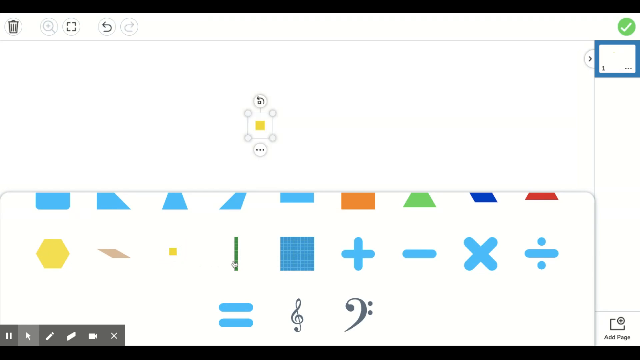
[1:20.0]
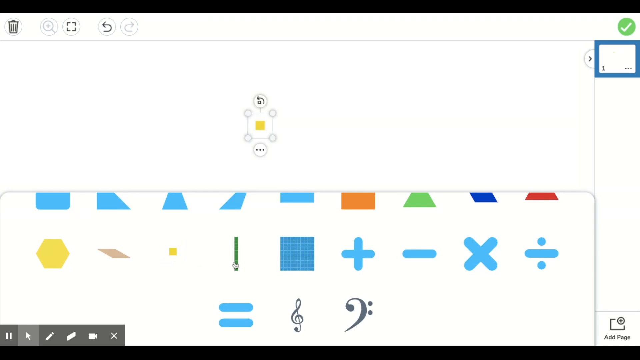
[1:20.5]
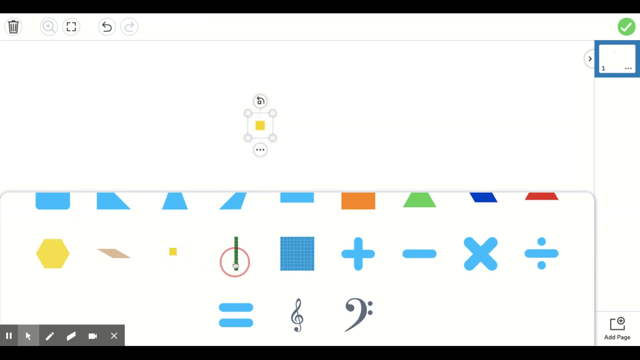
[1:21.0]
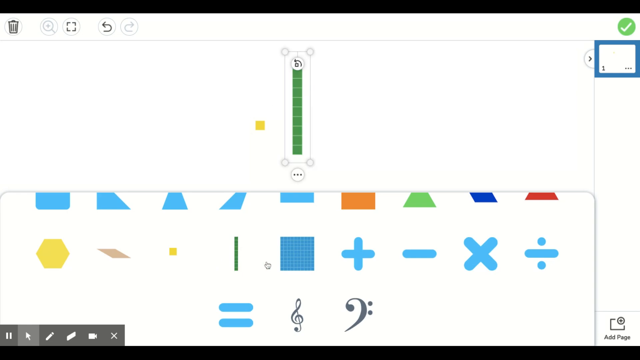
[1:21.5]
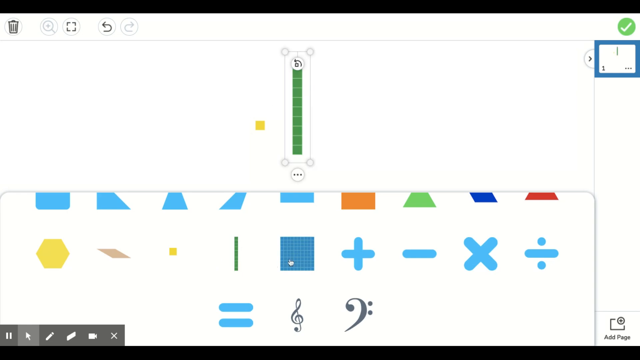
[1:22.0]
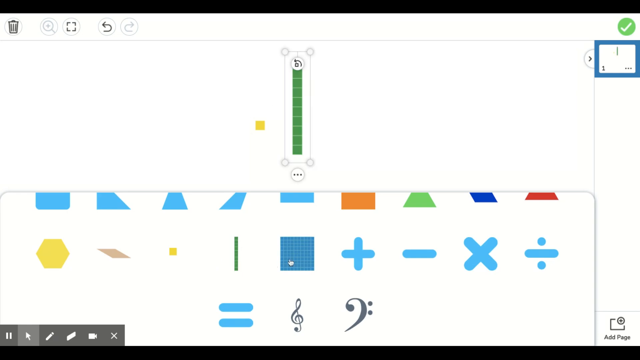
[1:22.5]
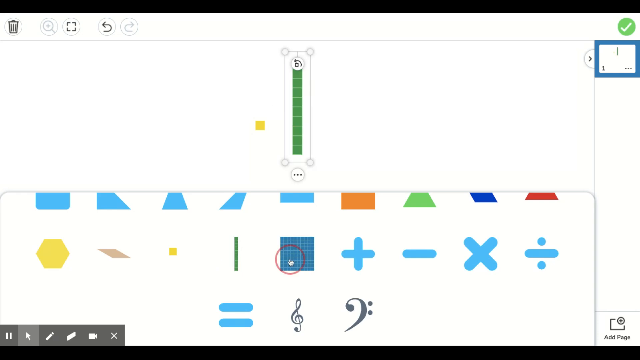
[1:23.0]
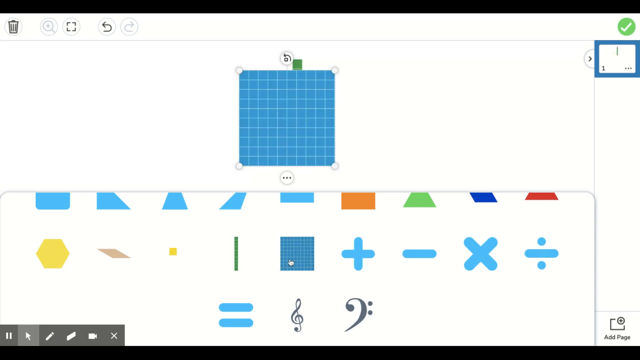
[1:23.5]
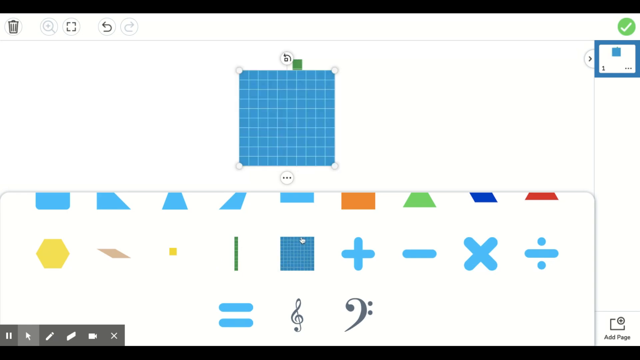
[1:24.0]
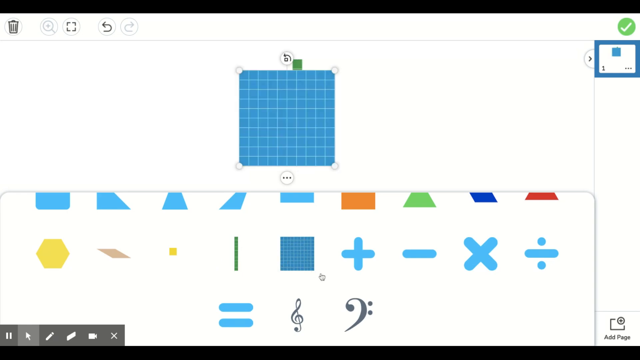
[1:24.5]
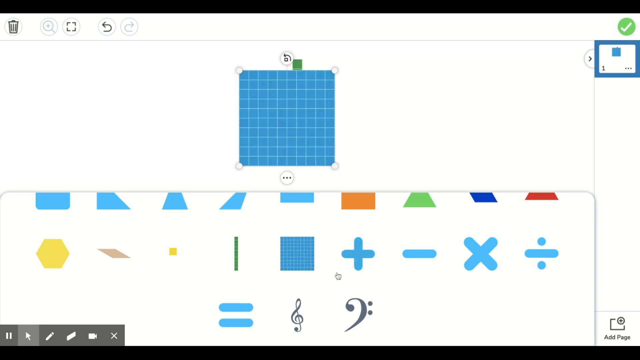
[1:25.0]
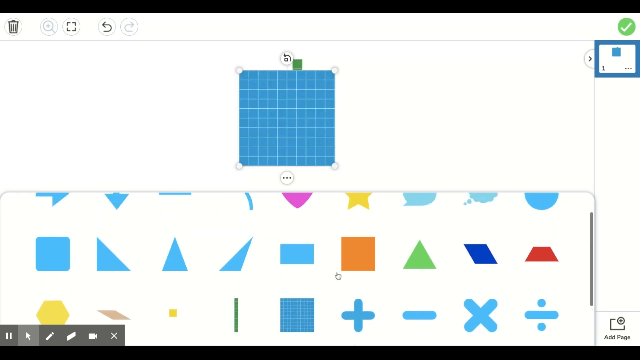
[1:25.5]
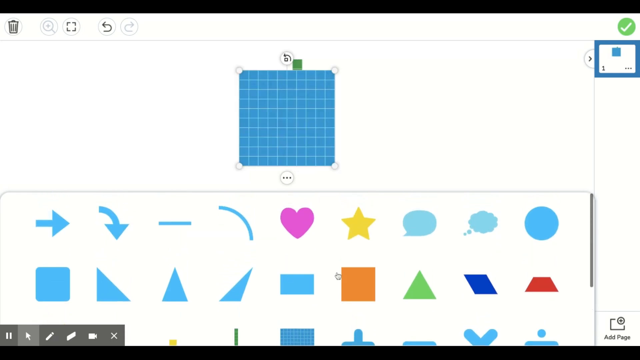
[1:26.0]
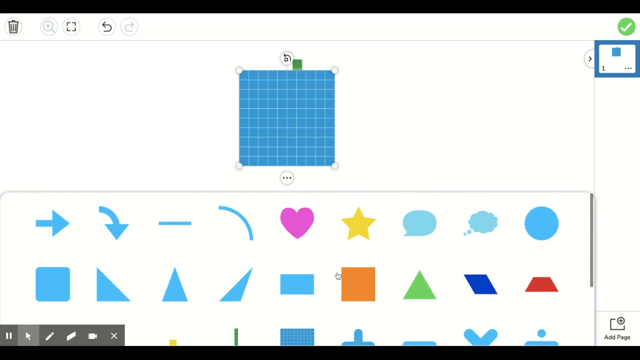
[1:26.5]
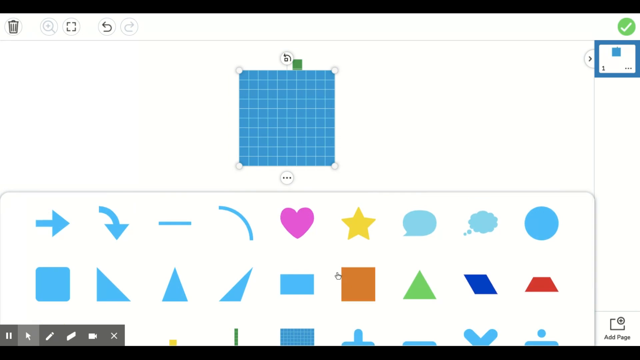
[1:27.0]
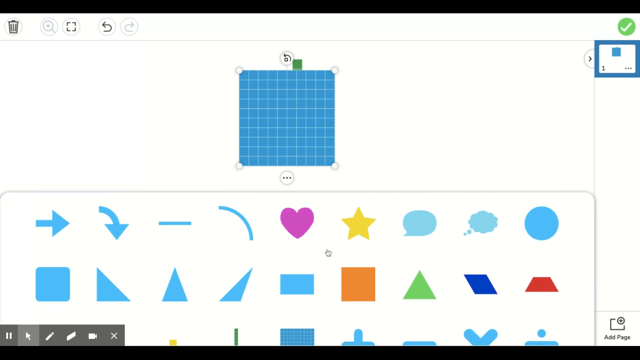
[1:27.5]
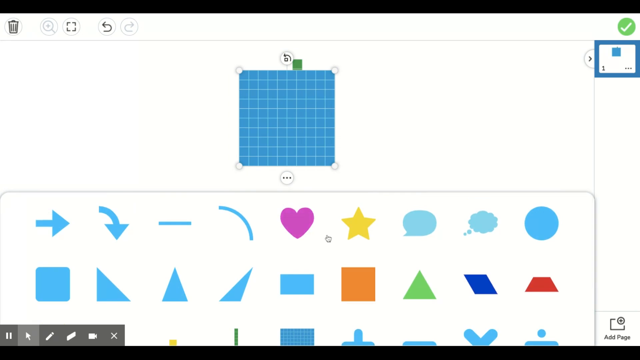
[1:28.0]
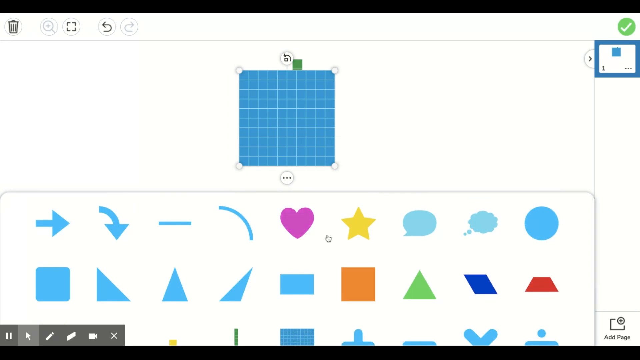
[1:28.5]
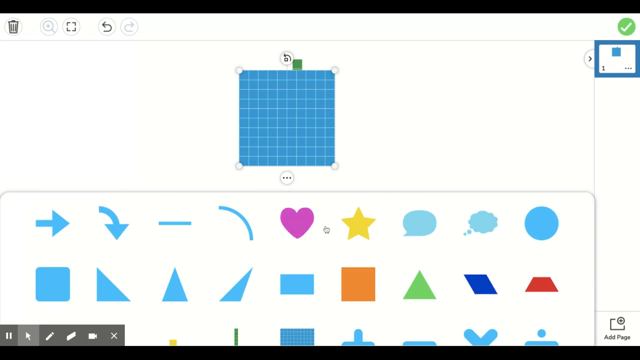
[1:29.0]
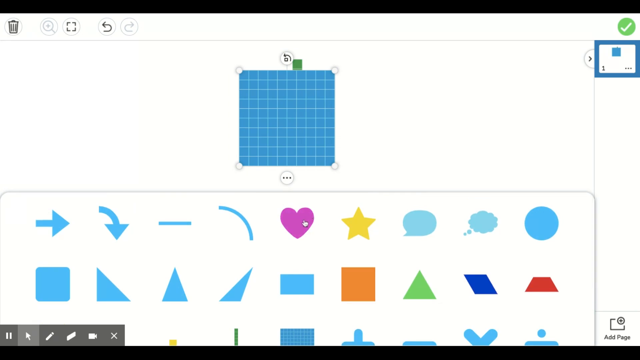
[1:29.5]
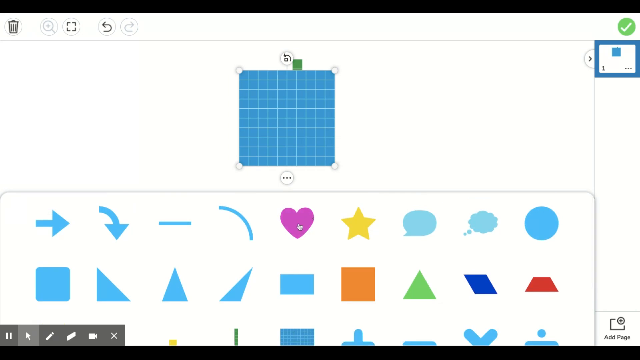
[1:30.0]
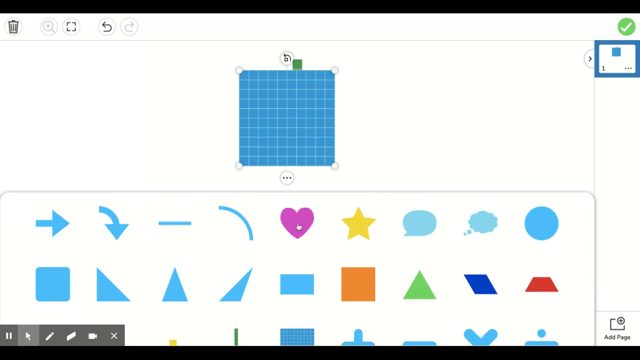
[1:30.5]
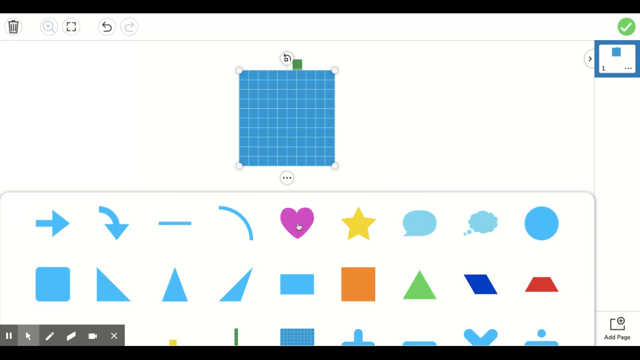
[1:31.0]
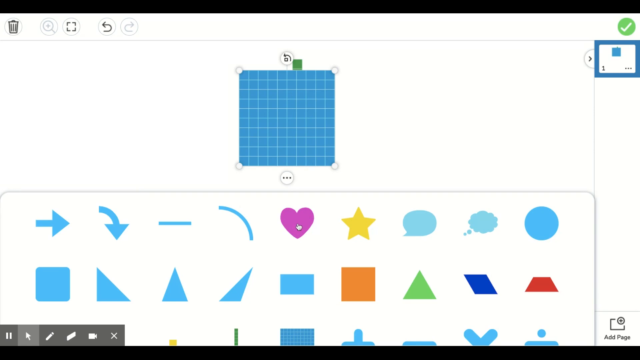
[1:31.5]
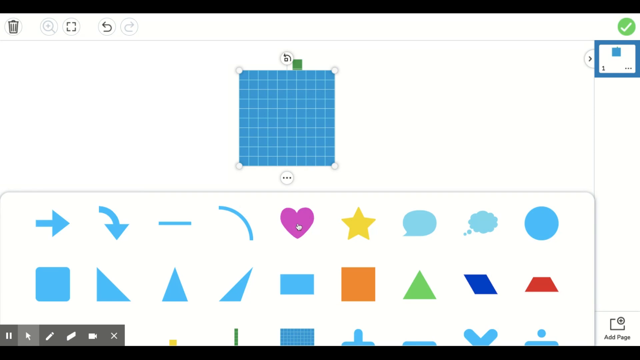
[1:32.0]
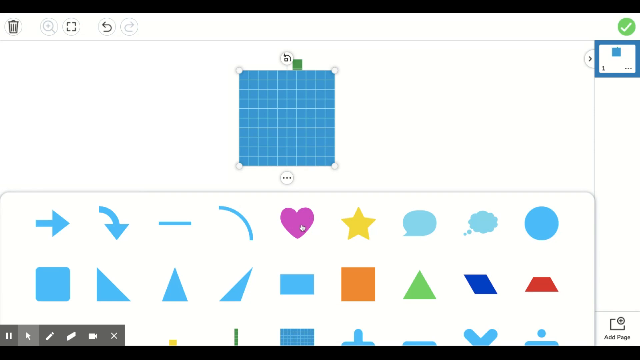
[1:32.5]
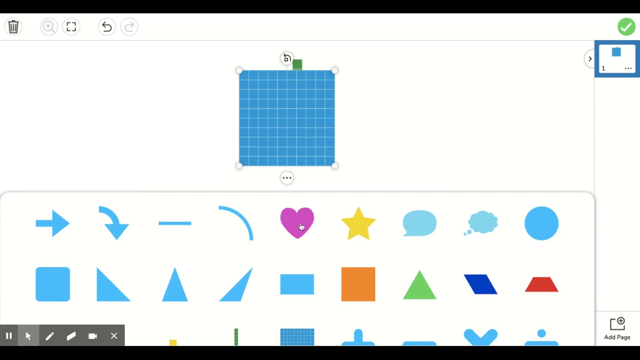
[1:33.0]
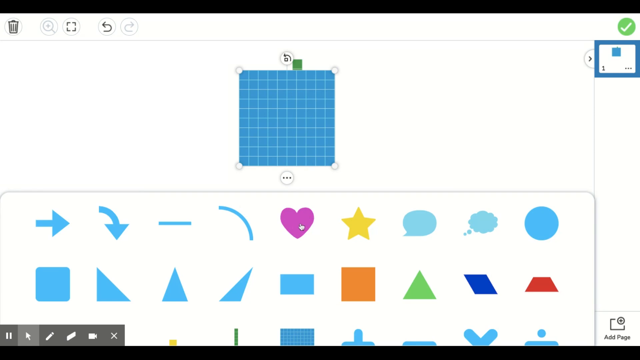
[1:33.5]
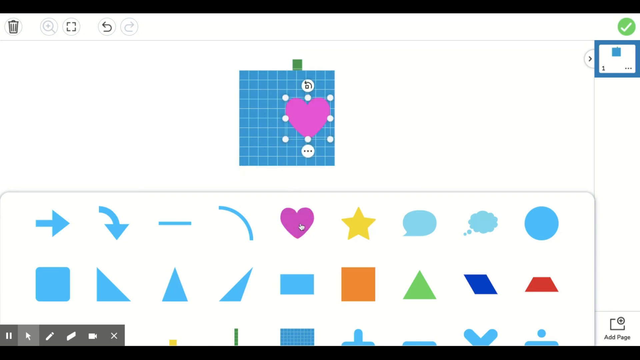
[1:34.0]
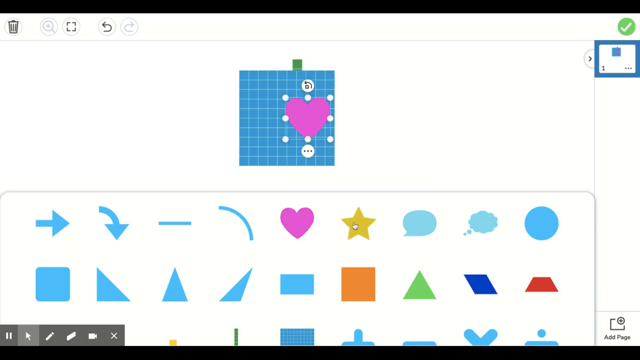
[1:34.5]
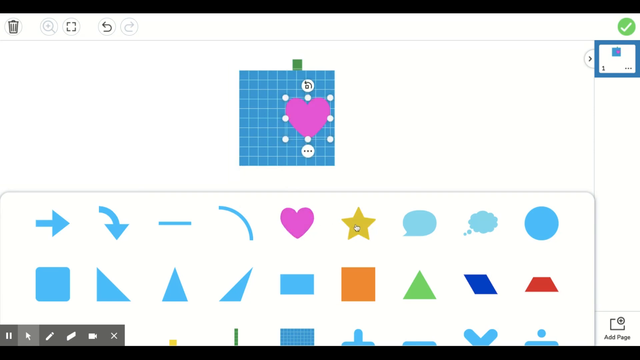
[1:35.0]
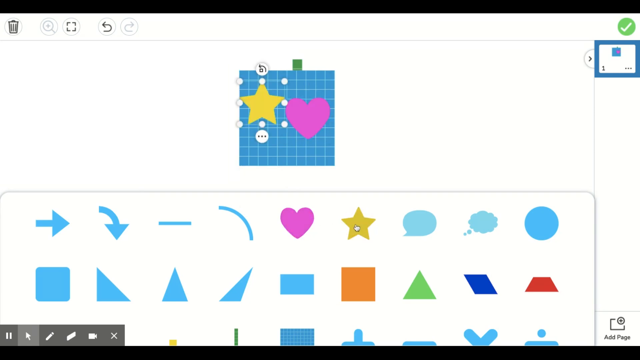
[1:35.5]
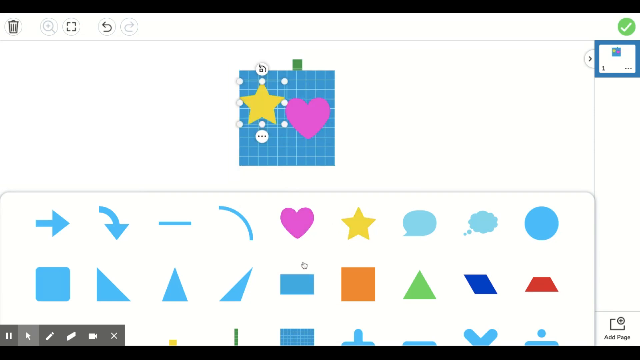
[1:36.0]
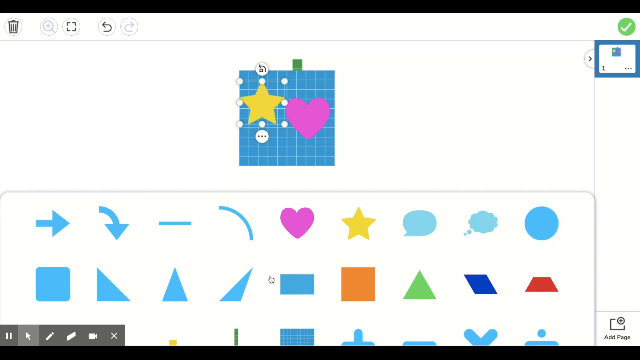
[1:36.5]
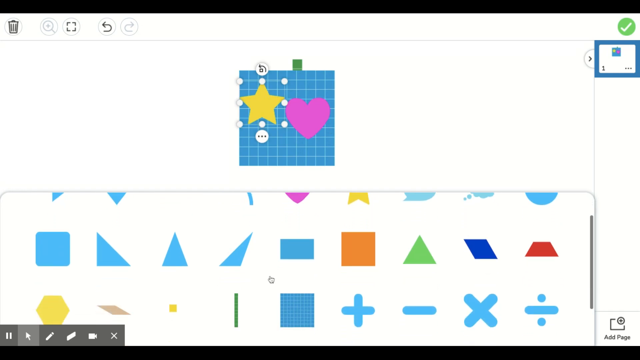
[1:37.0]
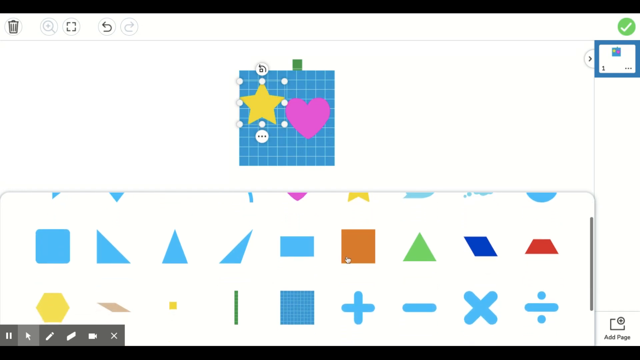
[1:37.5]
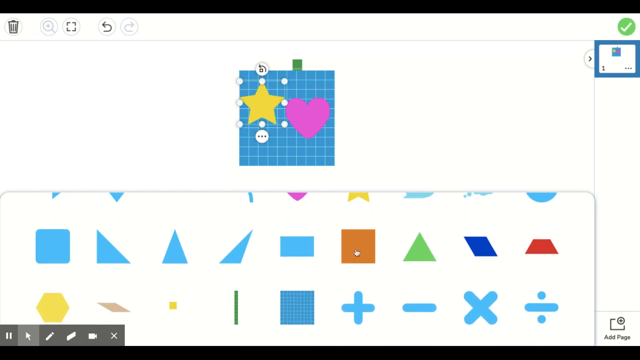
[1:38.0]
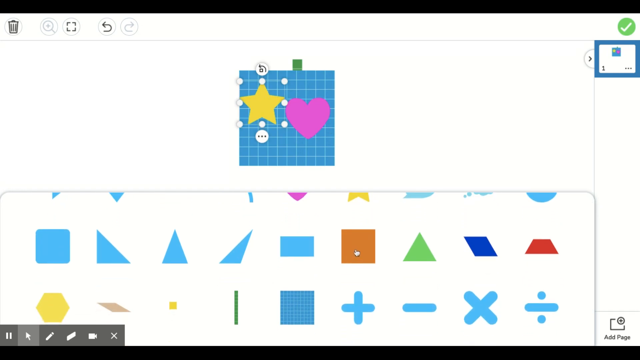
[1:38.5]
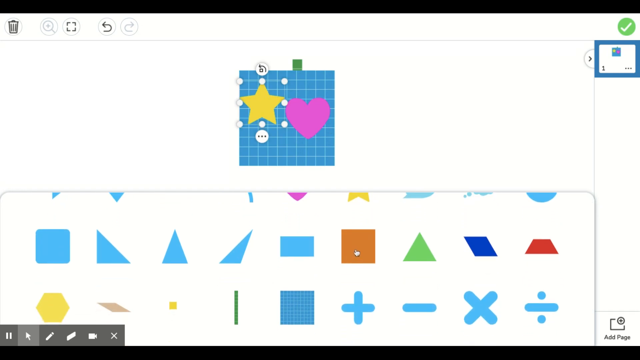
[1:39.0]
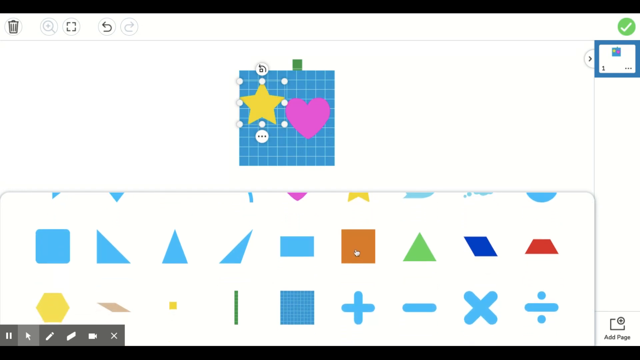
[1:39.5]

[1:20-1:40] A whiteboard has a couple of options along the top, and the bottom half of the screen is taken up mostly by a variety of shapes, including squares, triangles and math shapes. The top half has a mostly white background with a single yellow square. Around the yellow square are four lines with four circles, potentially to adjust the size, as well as two buttons, one above and one below it. The user clicks another shape from the bottom, a green vertical line with horizontal lines throughout it. The green line appears at the top in the empty white area with four lines and four circles around it, and the yellow square loses its surrounding lines. The user then adds a blue square, a pink heart and a yellow star, and after each is clicked, it appears at the top in the formerly empty space.